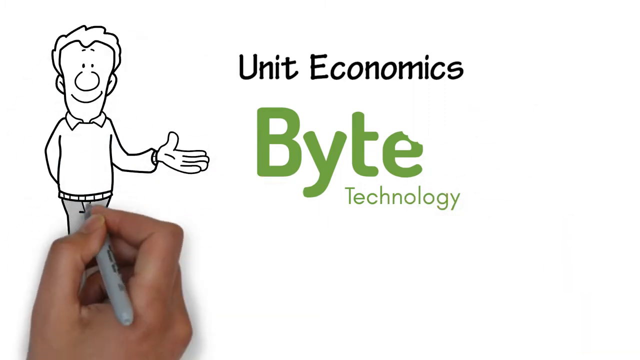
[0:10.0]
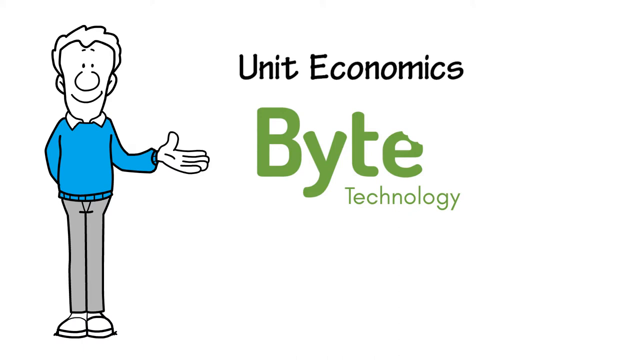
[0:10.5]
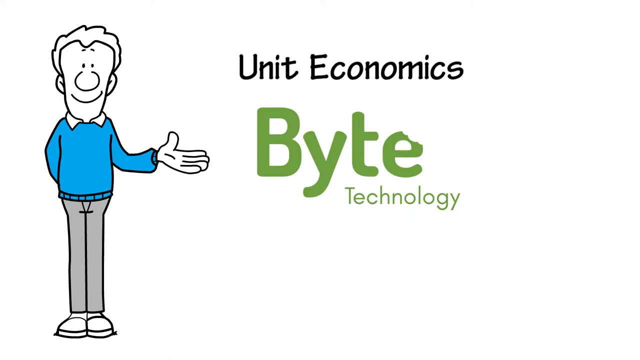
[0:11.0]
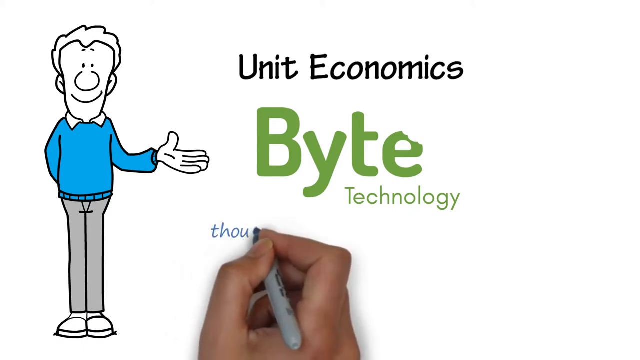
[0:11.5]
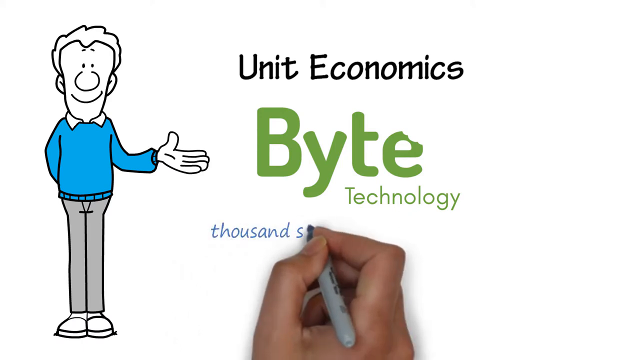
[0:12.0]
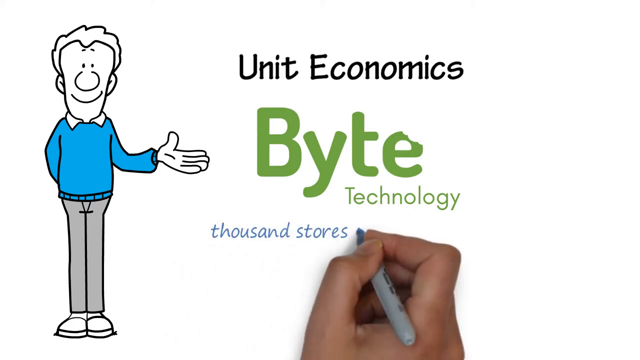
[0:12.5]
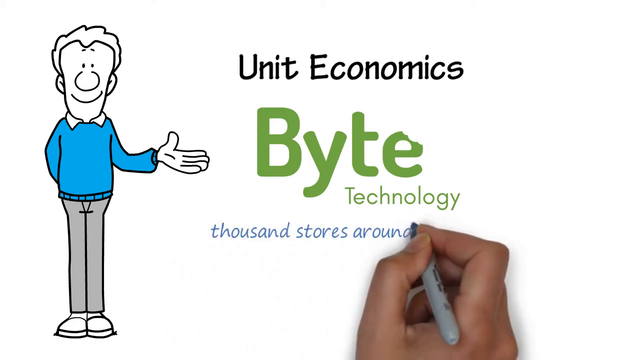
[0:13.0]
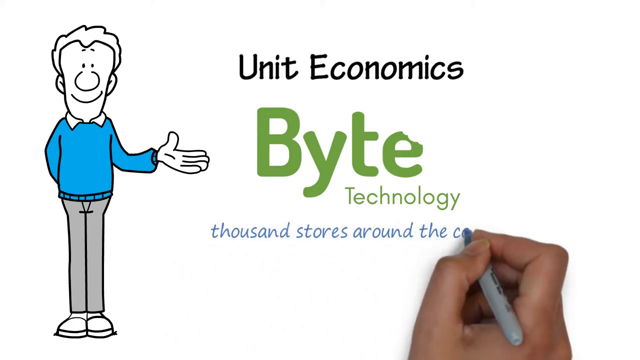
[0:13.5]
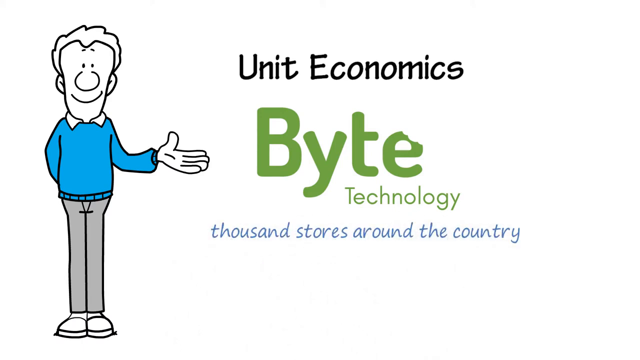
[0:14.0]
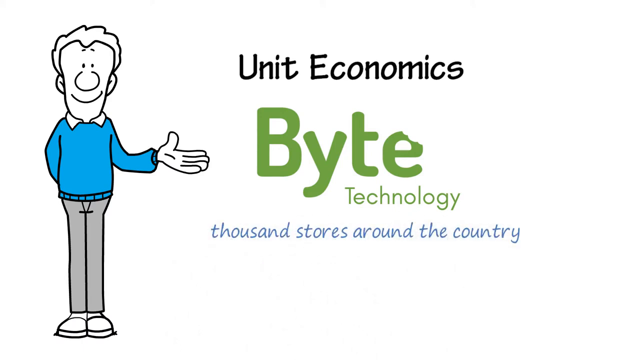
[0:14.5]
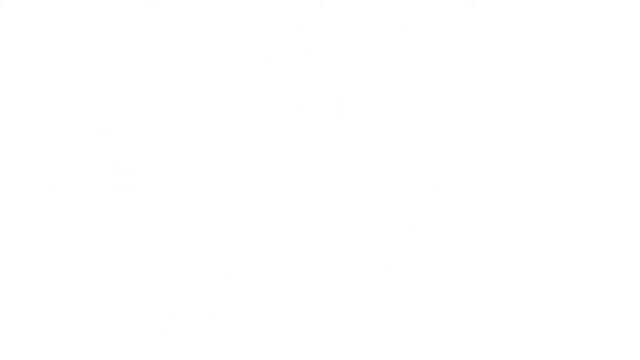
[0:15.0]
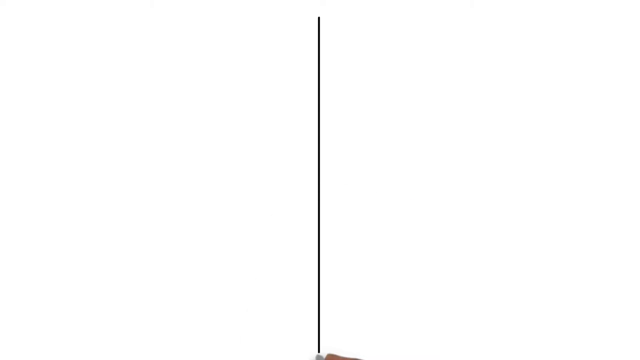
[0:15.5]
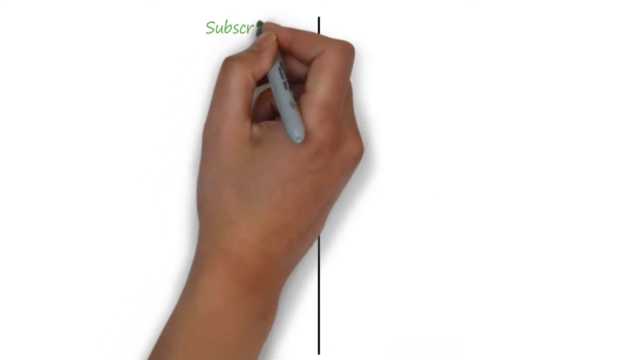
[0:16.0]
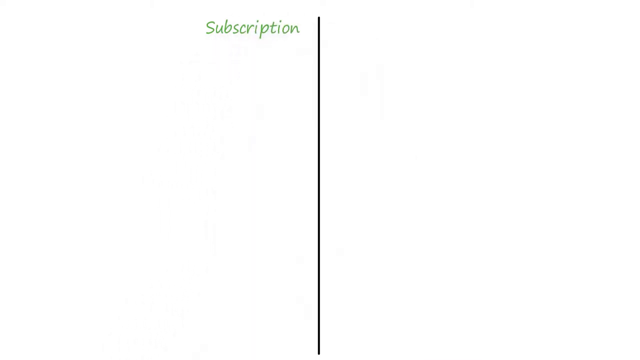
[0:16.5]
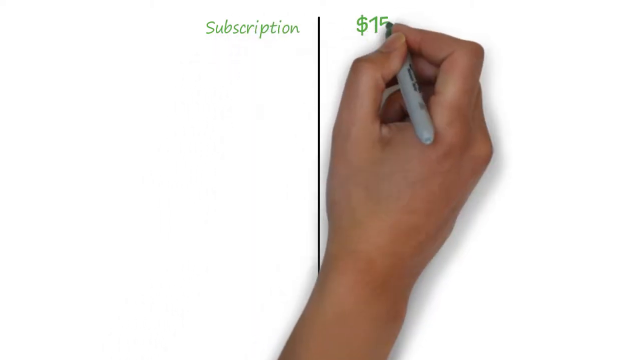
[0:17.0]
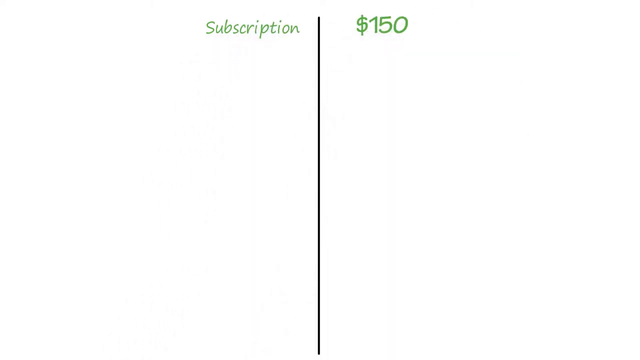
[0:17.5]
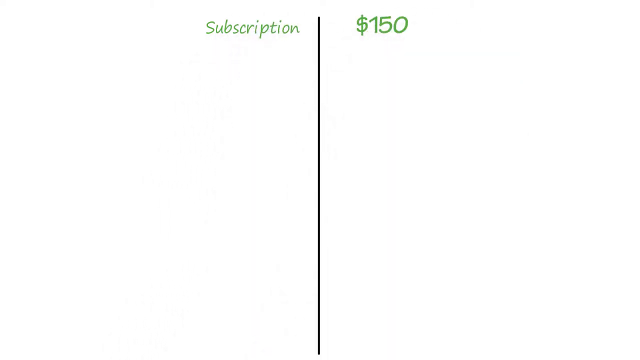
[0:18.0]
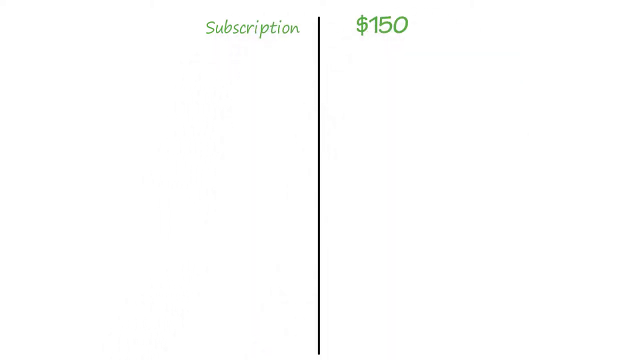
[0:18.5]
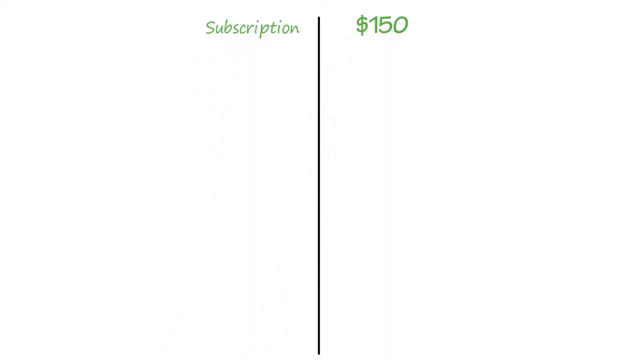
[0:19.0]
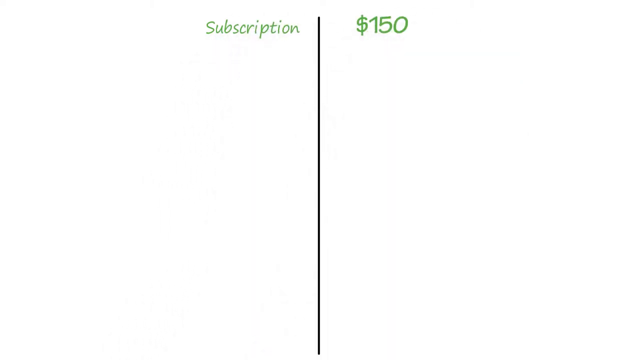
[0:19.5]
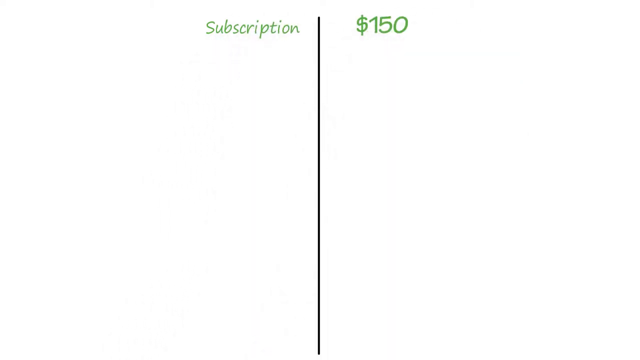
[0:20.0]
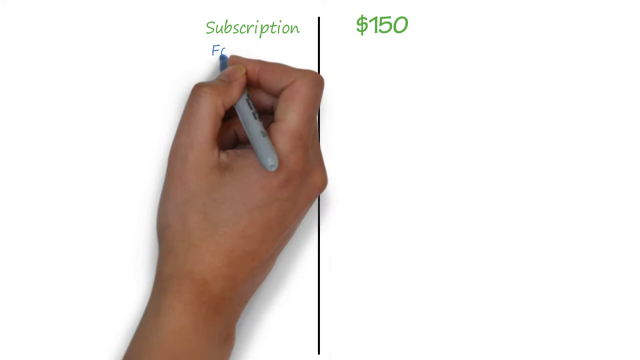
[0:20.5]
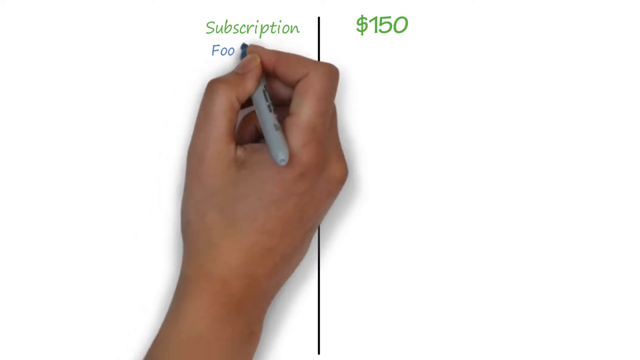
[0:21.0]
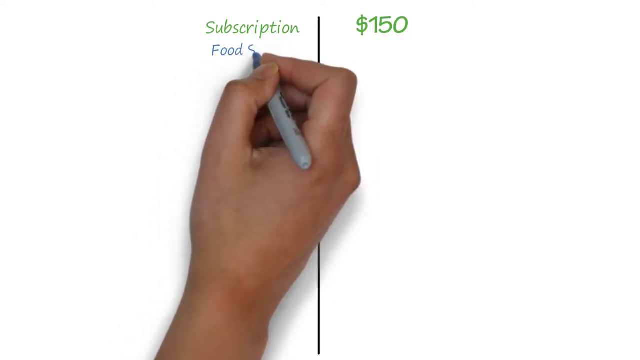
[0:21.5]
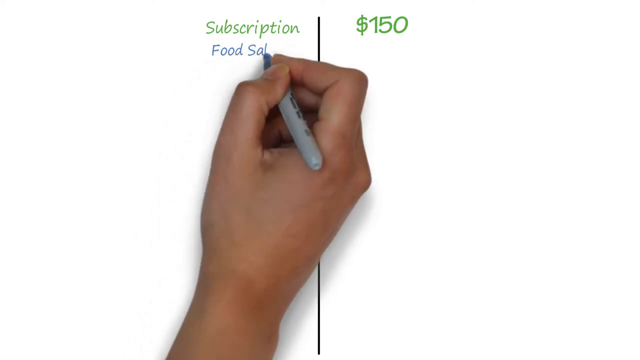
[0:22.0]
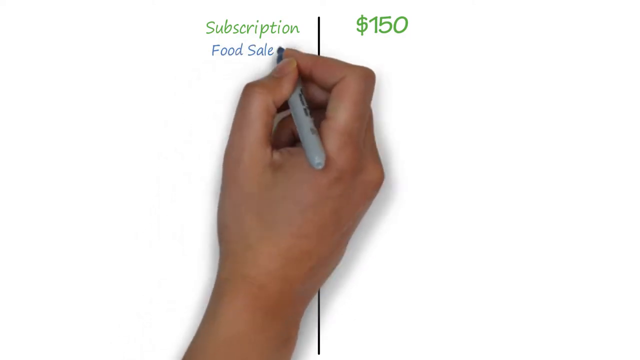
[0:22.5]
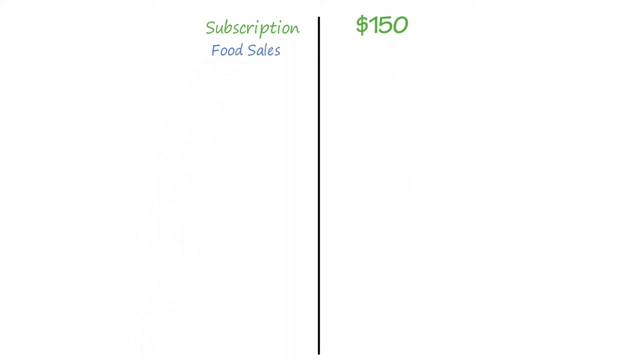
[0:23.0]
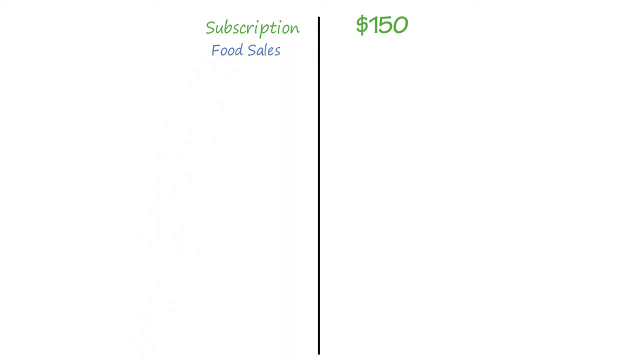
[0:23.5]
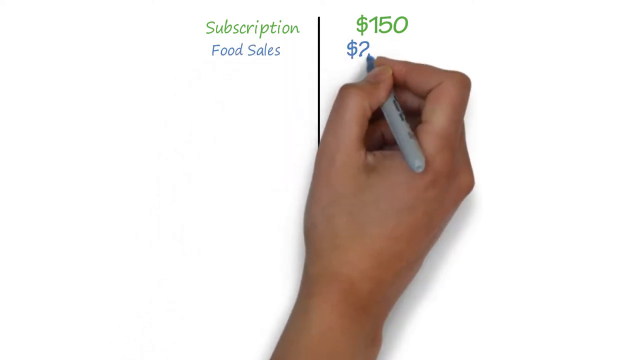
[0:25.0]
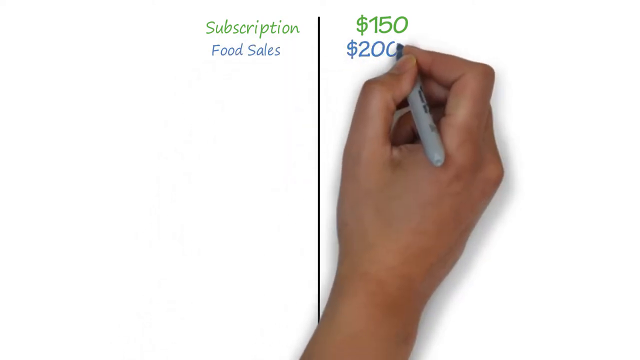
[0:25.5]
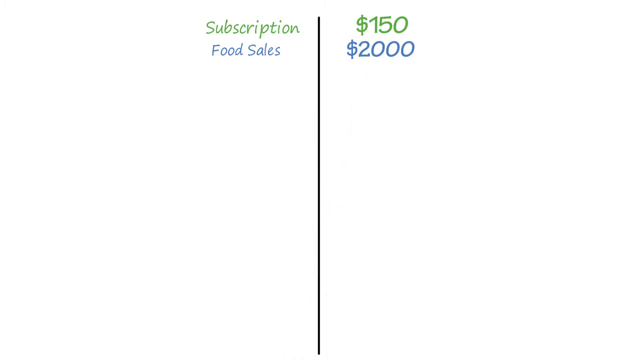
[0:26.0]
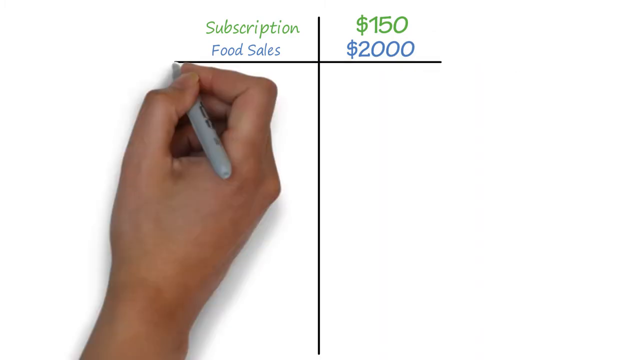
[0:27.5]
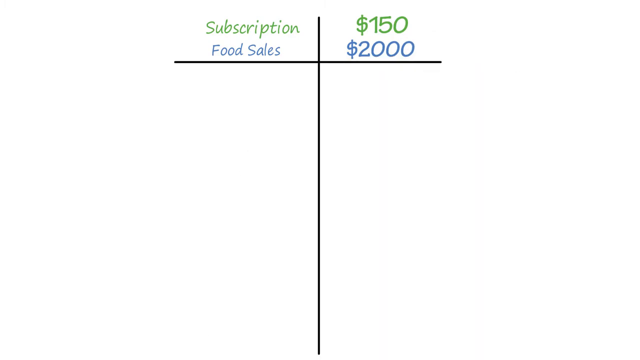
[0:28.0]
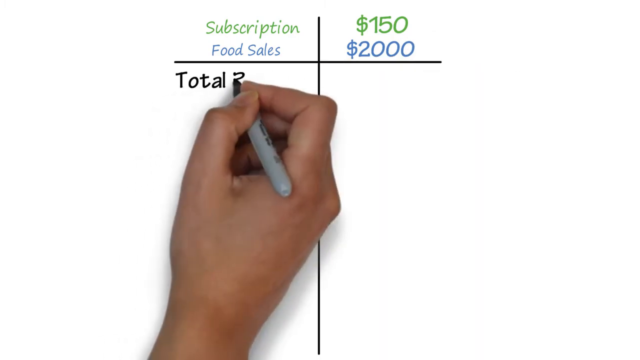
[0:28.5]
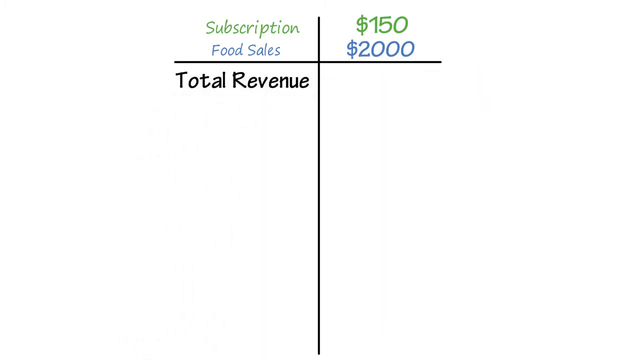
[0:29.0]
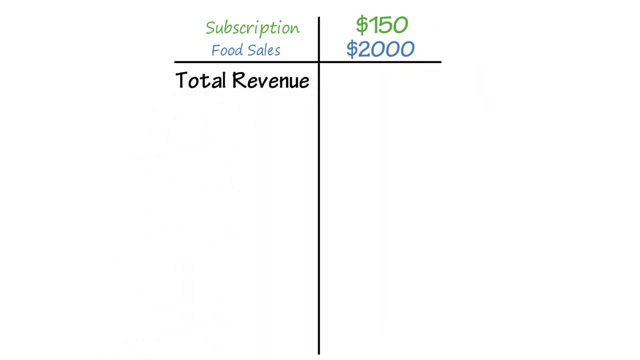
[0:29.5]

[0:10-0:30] The drawn man holds his left hand towards the Byte Technology logo in the middle of the screen. The same hand appears and, with the same Sharpie marker, writes "thousands stores around the country" in blue ink under the logo. The video then transitions to a different, completely white screen, where a black line is drawn down the middle, dividing the screen into left and right. On the left of the line, "subscription" is written in green ink, and on the other side the amount "$150" is written in the same green ink. Below subscription on the left, "food sales" is written in blue ink, and on the right side of the line, in the same blue ink, the amount "$2,000". Another black line is then drawn under subscription, food sales and the two amounts, crossing the first line. Under this crossing line, "total revenue" is written in bold black ink on the left.